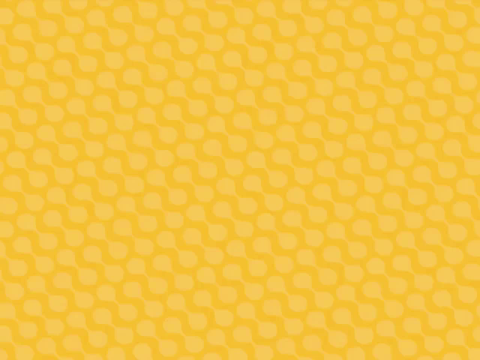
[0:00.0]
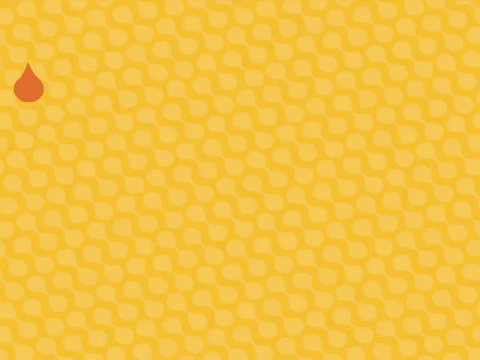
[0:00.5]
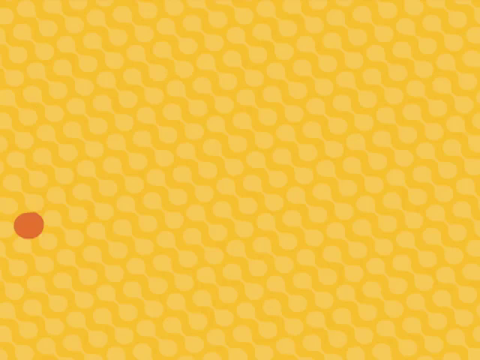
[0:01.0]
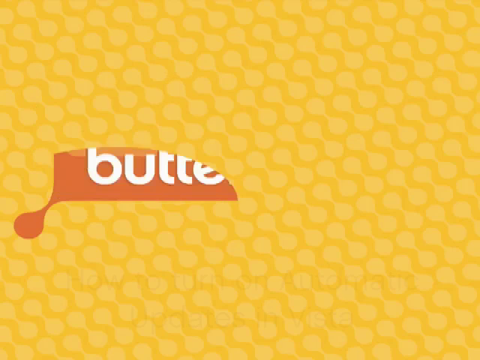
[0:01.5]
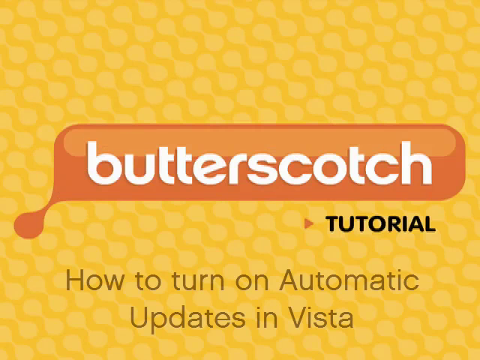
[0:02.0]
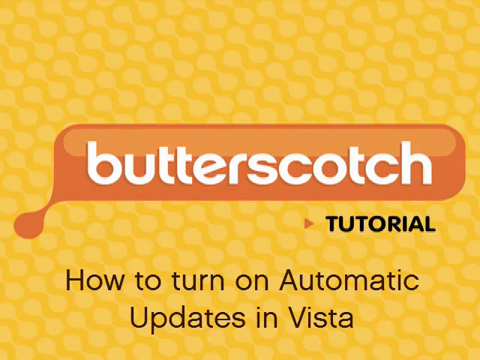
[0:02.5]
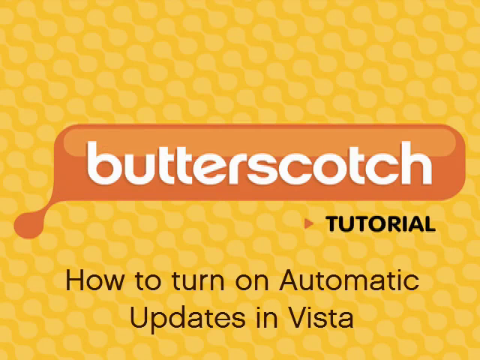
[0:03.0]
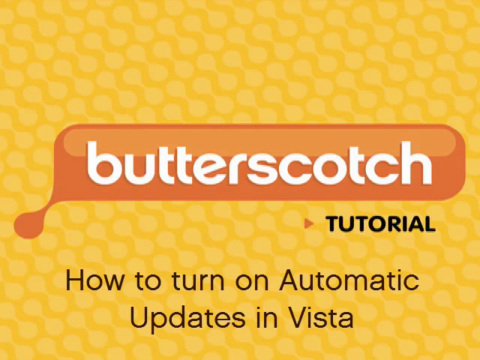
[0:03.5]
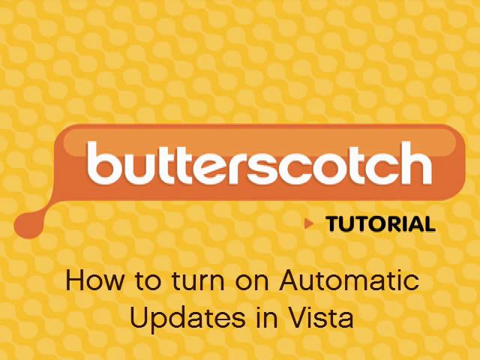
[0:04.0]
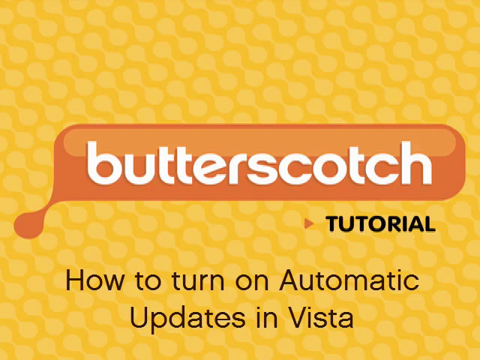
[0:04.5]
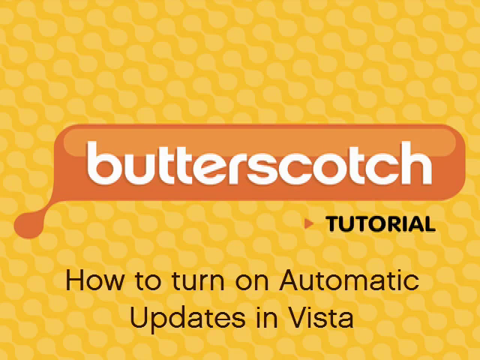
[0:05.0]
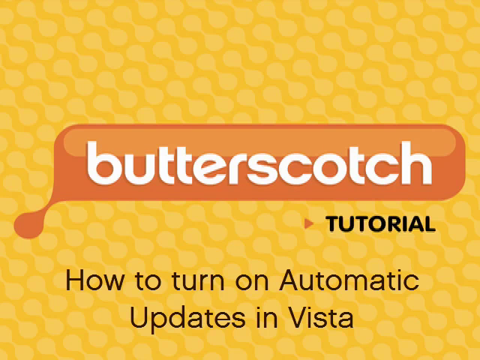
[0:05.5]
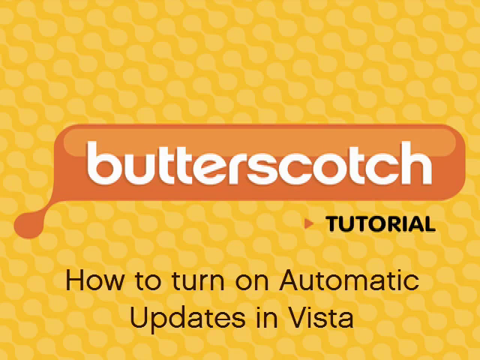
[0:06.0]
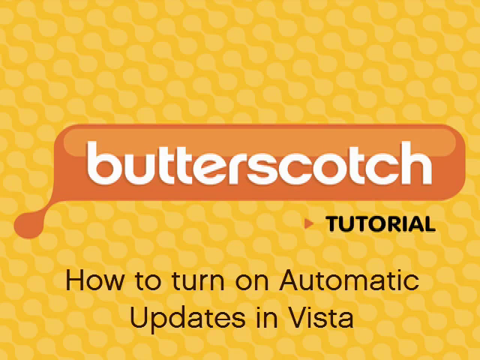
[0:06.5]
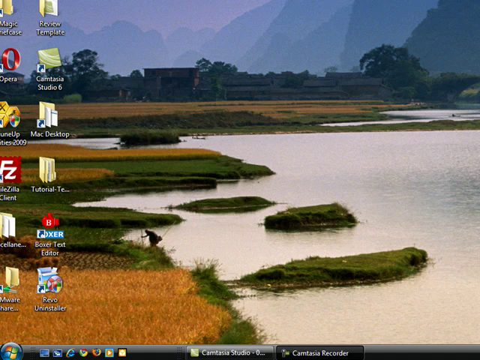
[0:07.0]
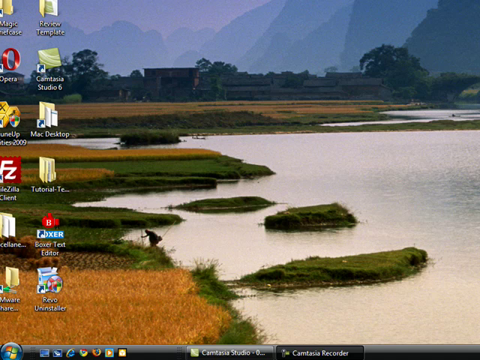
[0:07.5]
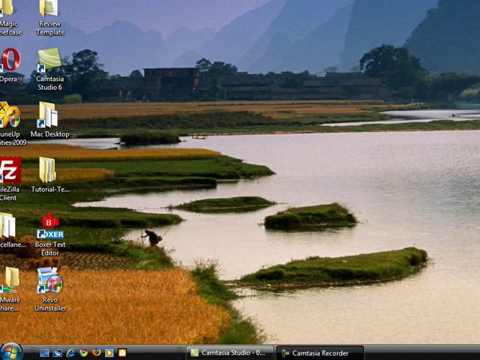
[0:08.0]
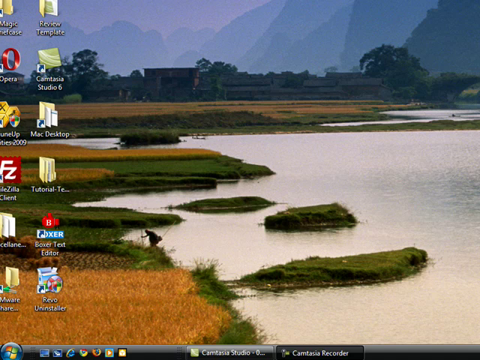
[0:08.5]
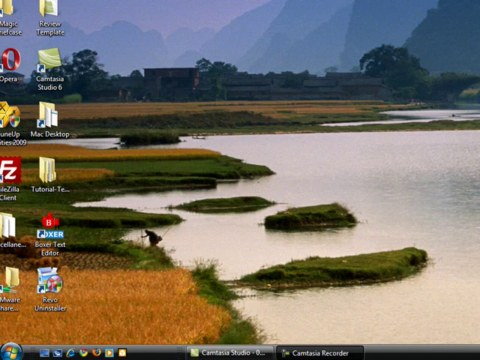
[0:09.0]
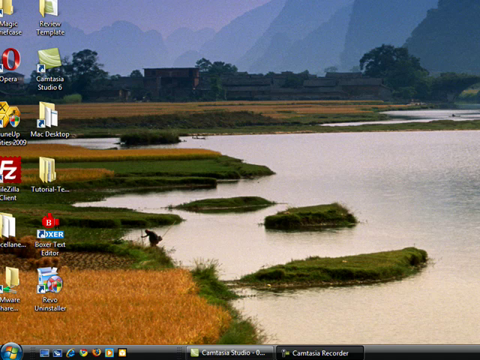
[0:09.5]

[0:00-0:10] At the start of the video, a drop of brown liquid falls onto a yellow screen, and the words "Butterscotch tutorial, how to turn on updates in Vista" pop up. The scene then changes to a computer screen showing a body of water with quite large rocks in the middle of it. Next to the water is a body of land that is both green and brown. On the left-hand side of the screen are several icons for different apps the person uses on their computer.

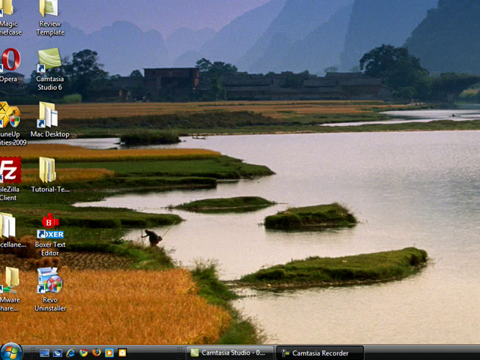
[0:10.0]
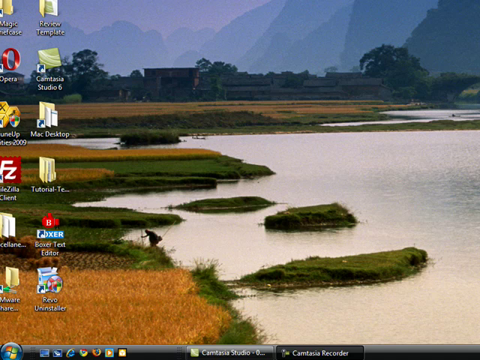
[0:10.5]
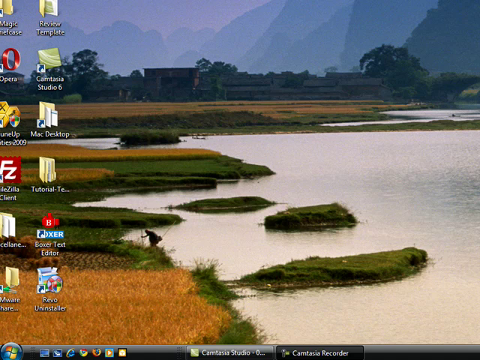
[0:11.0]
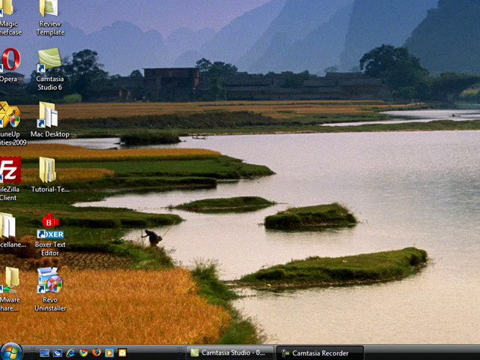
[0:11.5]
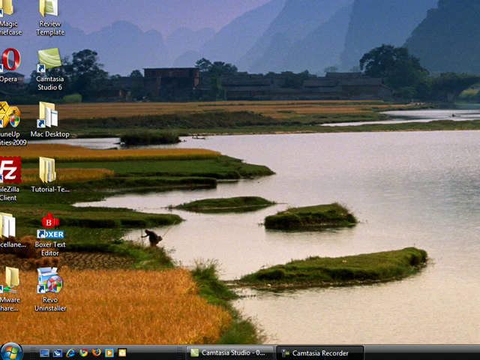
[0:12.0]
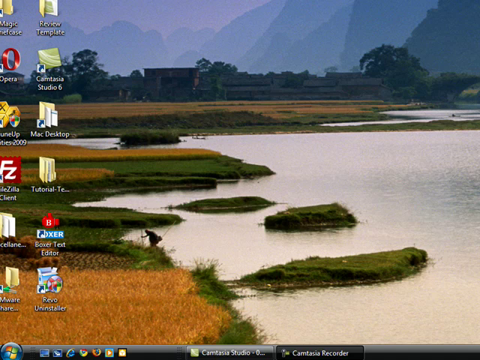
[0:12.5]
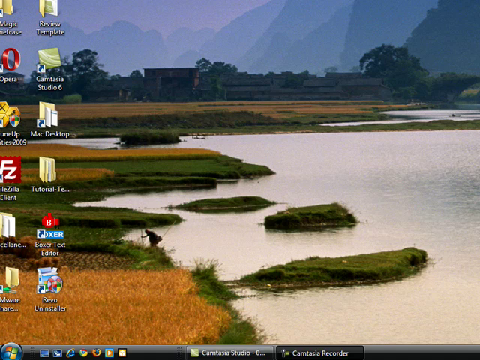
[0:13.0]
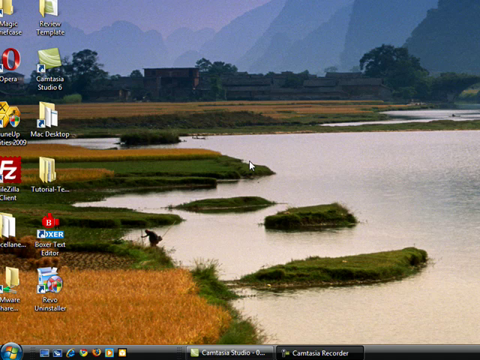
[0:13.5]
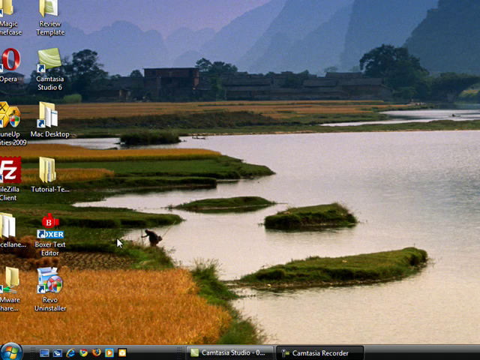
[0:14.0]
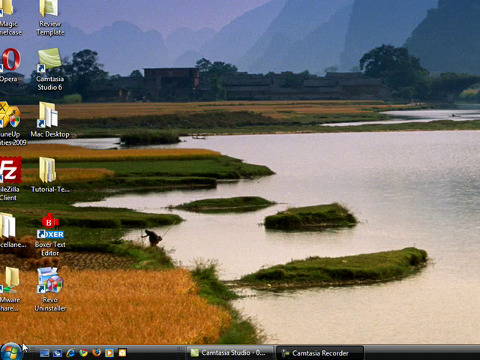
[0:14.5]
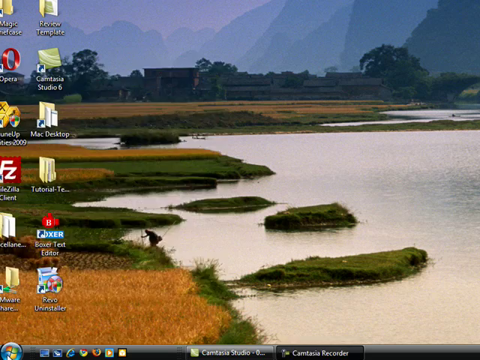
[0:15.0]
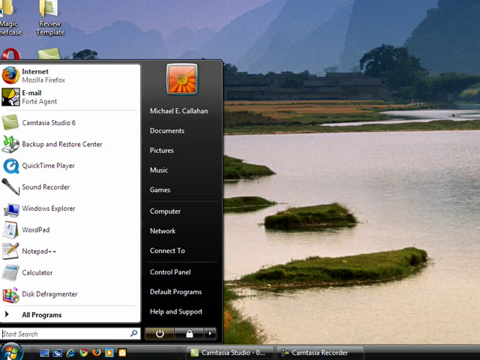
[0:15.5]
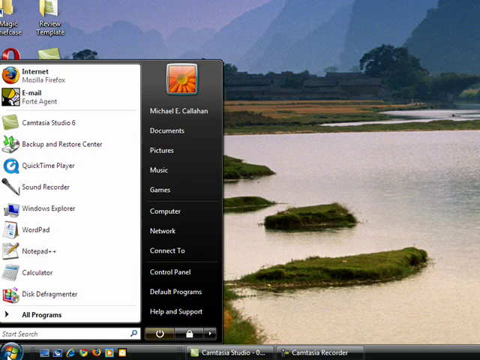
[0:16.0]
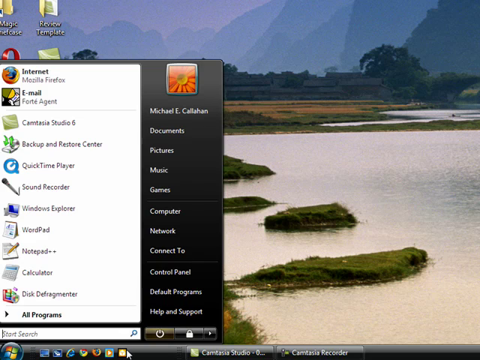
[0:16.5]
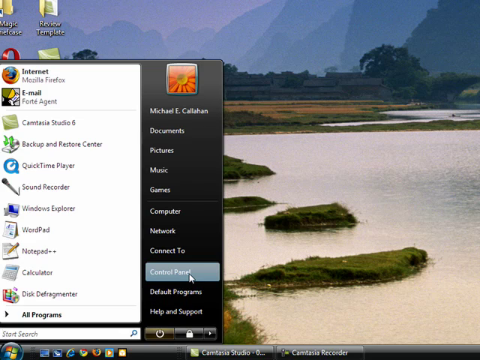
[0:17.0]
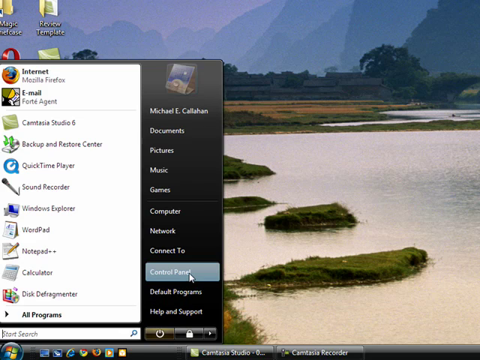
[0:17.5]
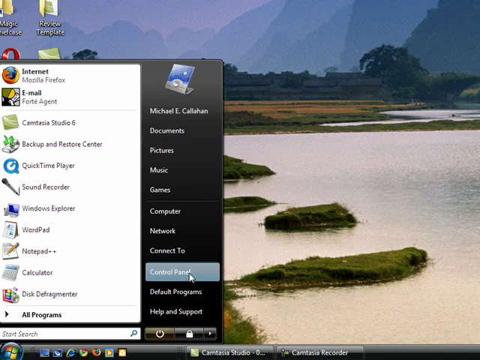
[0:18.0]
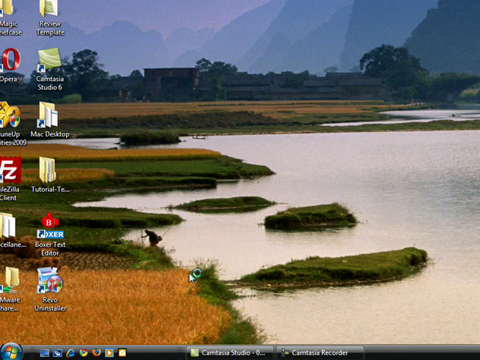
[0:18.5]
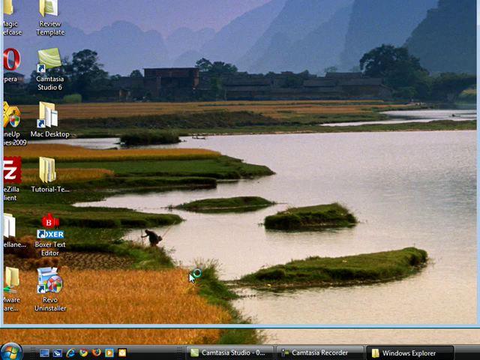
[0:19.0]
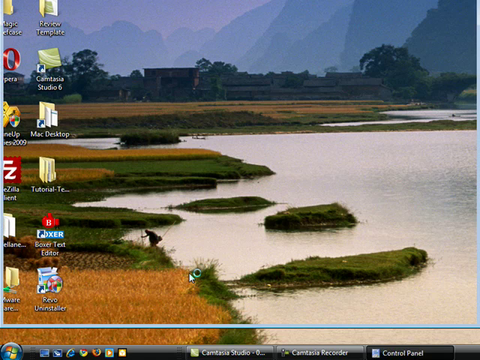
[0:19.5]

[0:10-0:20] A computer screen shows a body of water with three large rocks on the right side of the water and one large rock on the left side. By the water is a body of land whose surface is both green and brown. Several app icons appear on the left of the screen. The person clicks the Windows tab, goes to a menu, and clicks on the control panel in that menu.